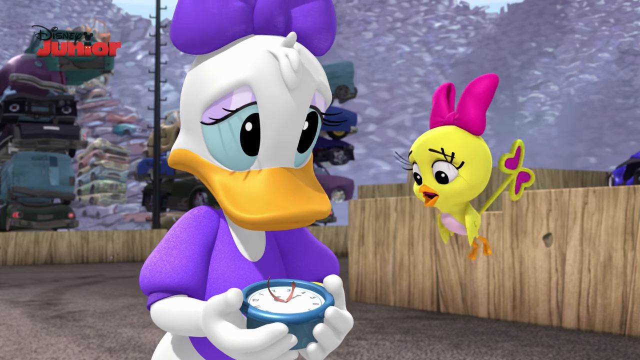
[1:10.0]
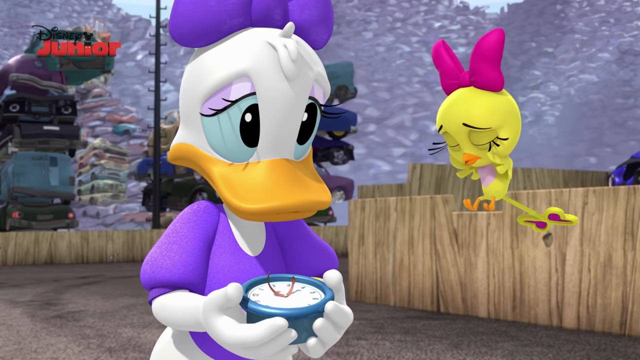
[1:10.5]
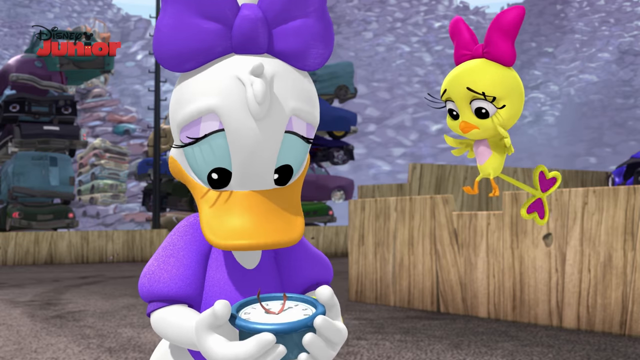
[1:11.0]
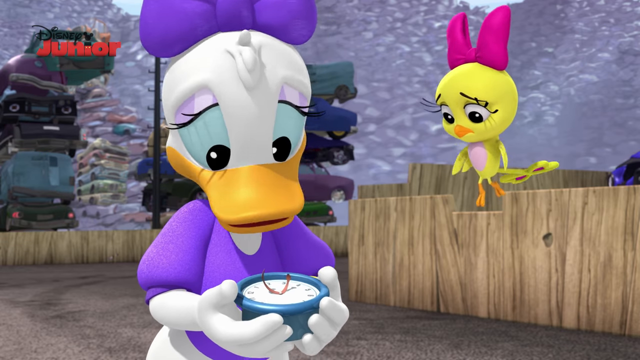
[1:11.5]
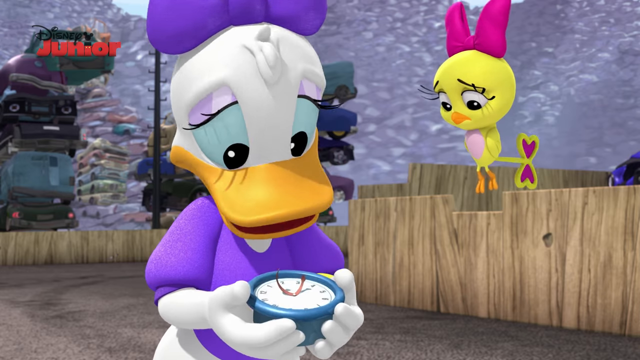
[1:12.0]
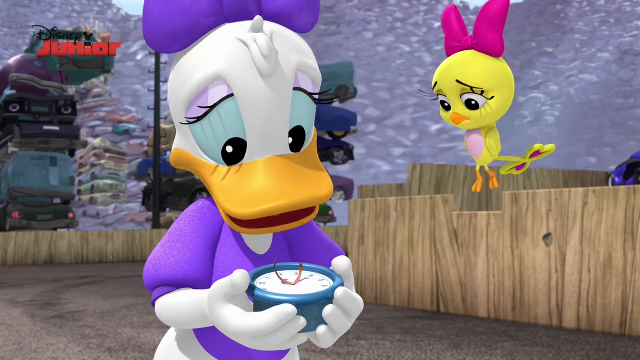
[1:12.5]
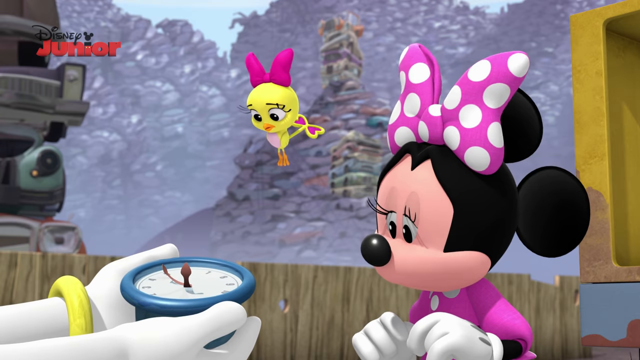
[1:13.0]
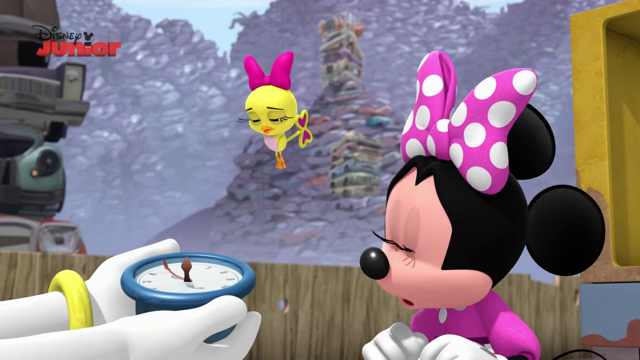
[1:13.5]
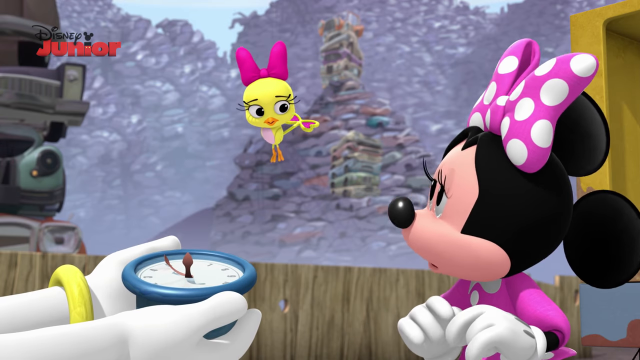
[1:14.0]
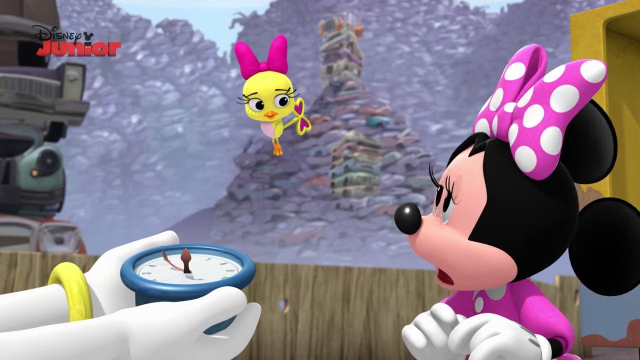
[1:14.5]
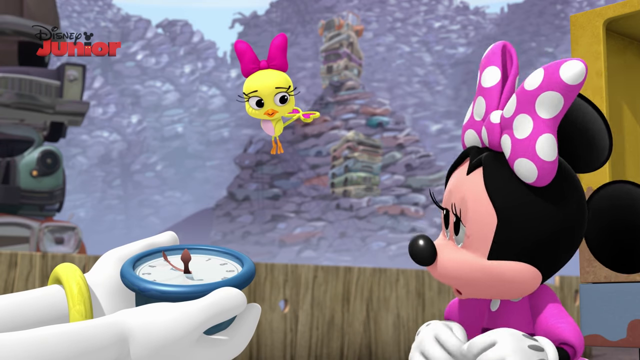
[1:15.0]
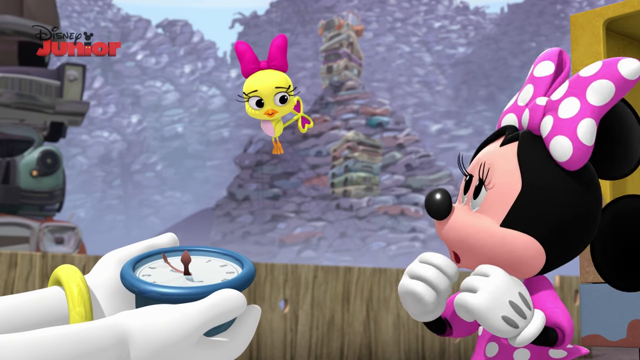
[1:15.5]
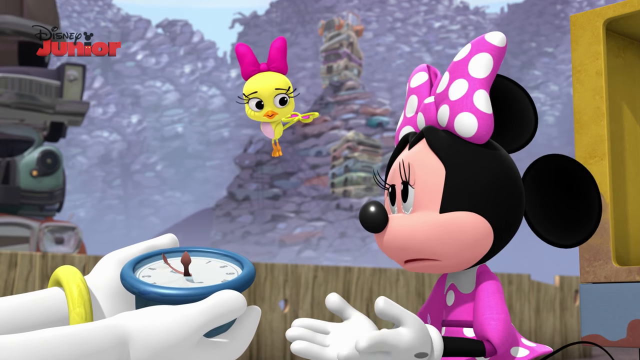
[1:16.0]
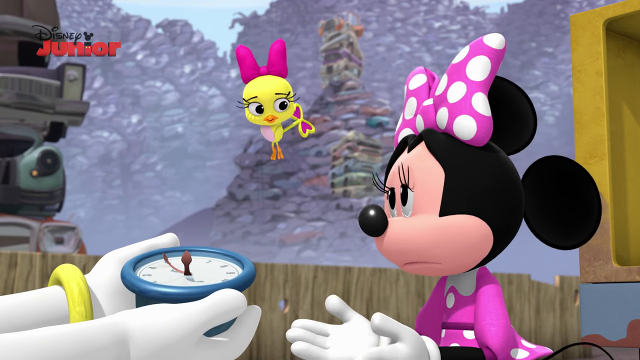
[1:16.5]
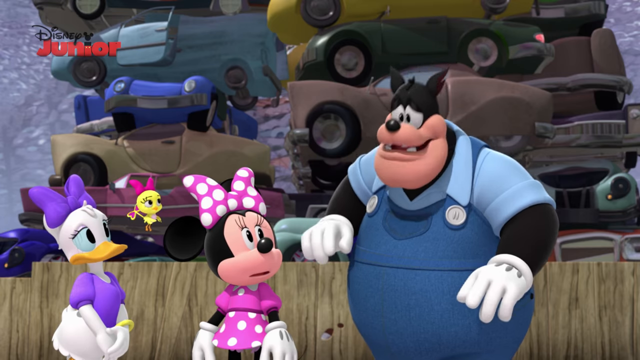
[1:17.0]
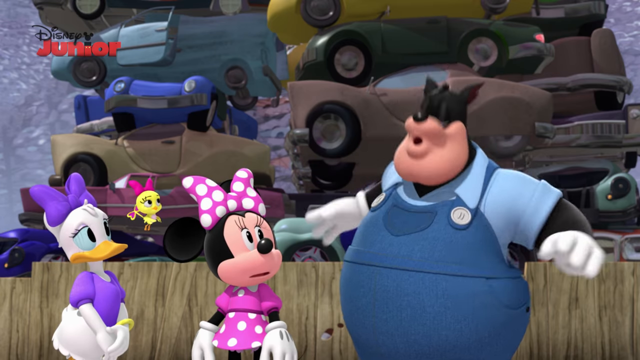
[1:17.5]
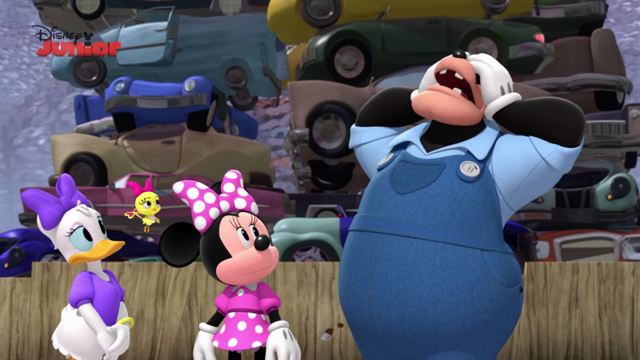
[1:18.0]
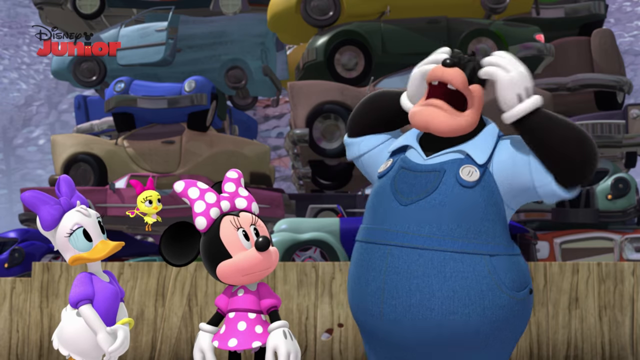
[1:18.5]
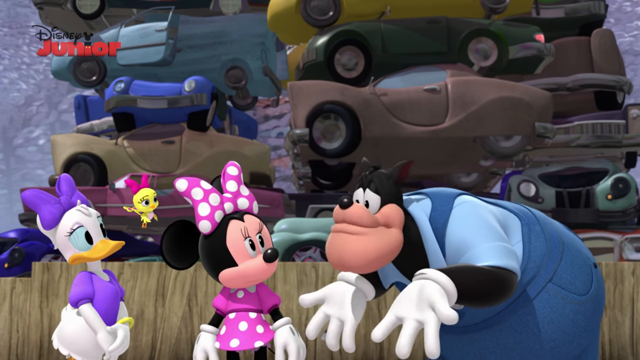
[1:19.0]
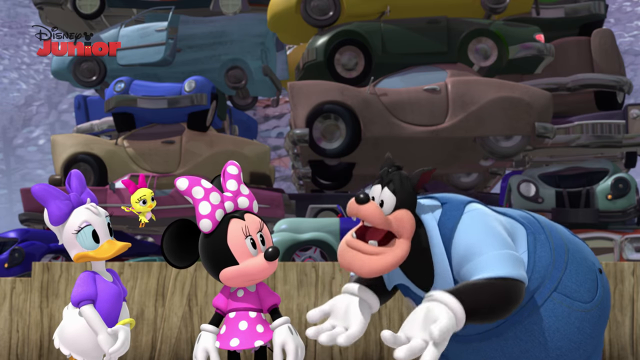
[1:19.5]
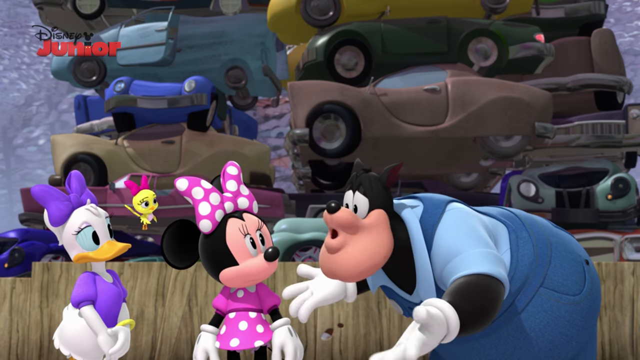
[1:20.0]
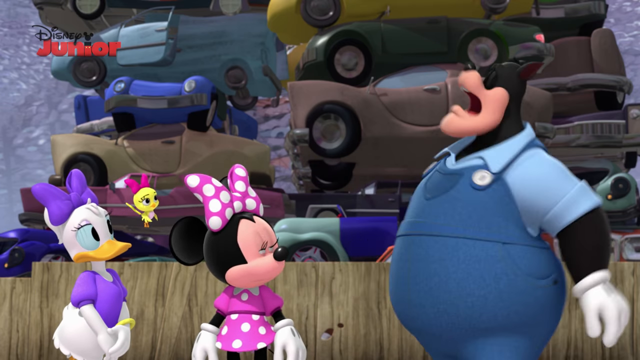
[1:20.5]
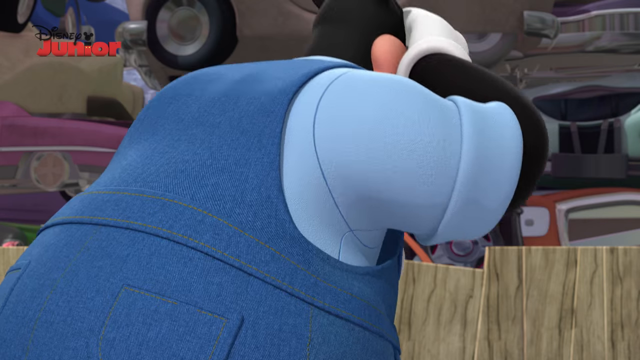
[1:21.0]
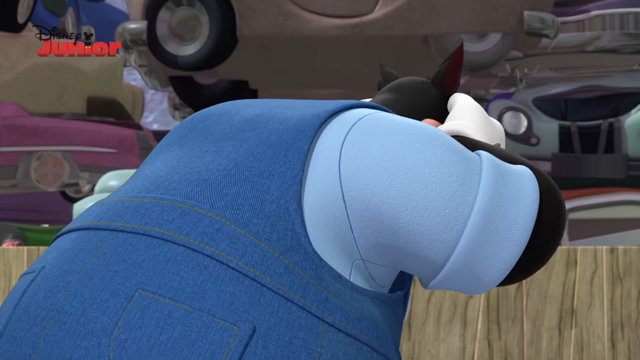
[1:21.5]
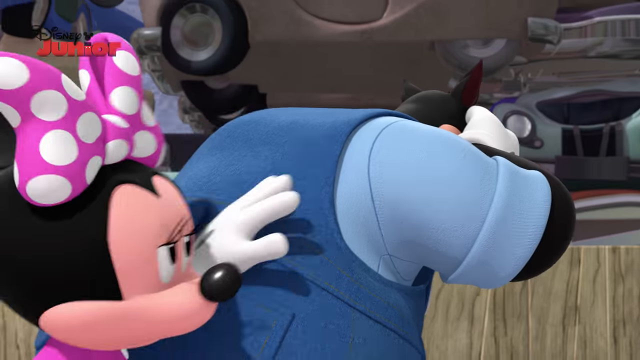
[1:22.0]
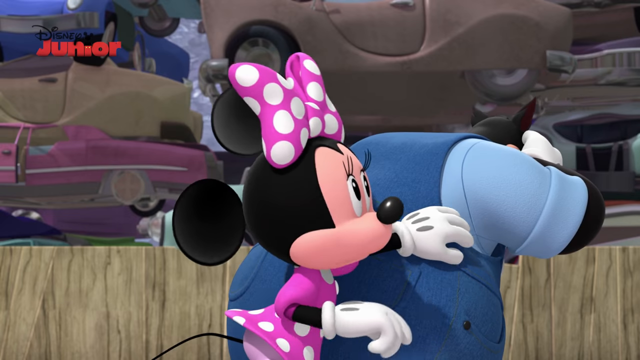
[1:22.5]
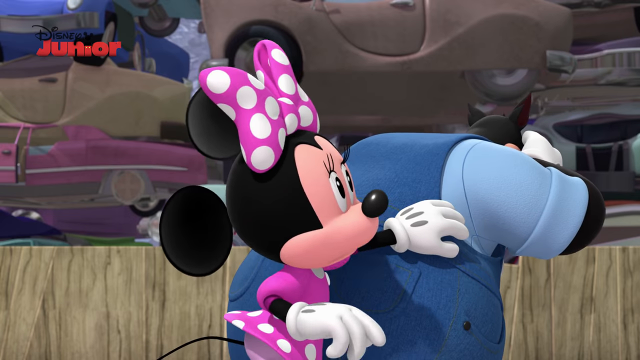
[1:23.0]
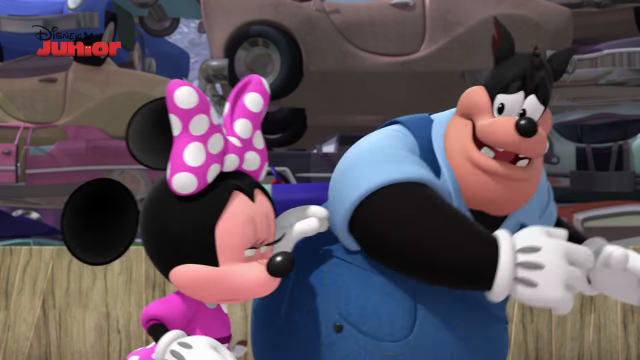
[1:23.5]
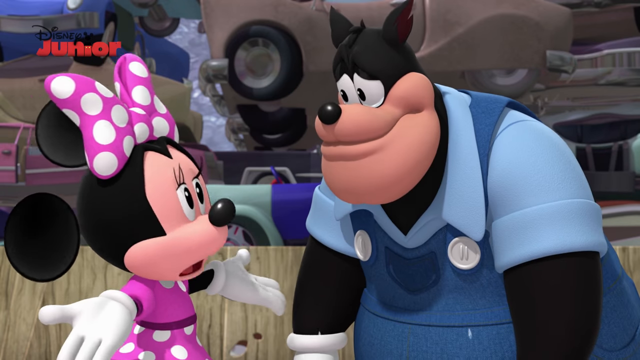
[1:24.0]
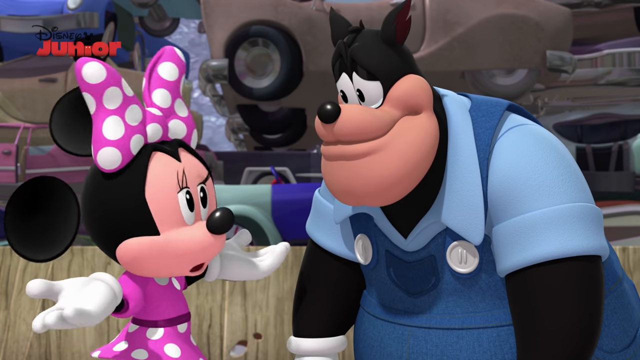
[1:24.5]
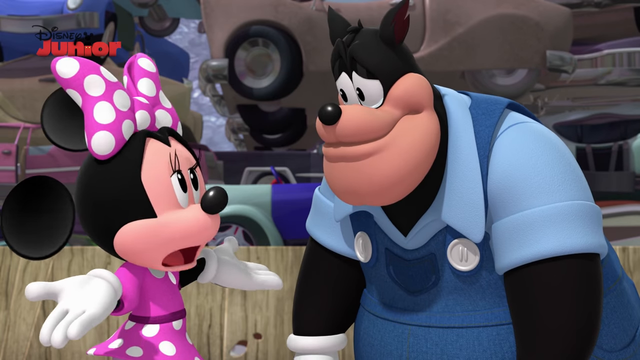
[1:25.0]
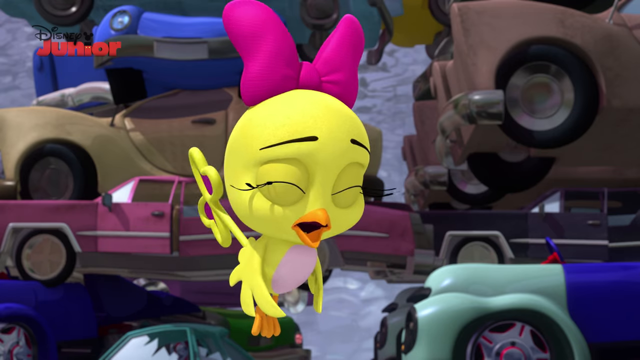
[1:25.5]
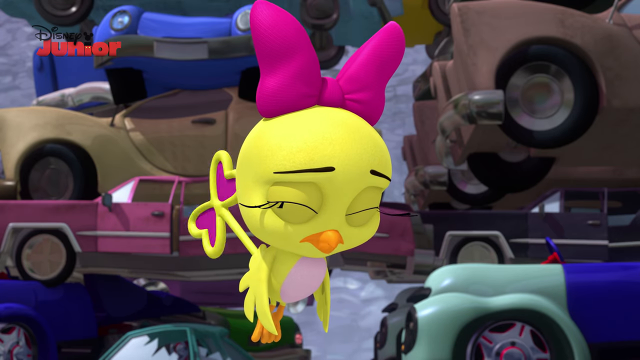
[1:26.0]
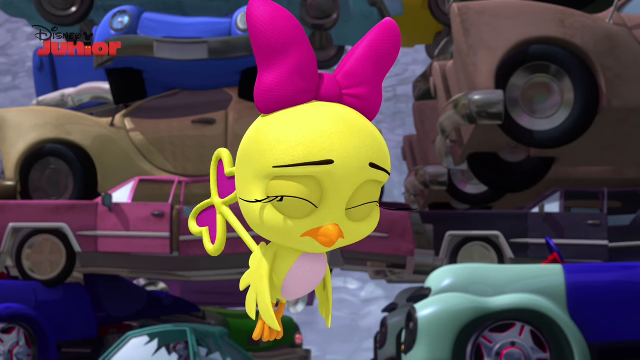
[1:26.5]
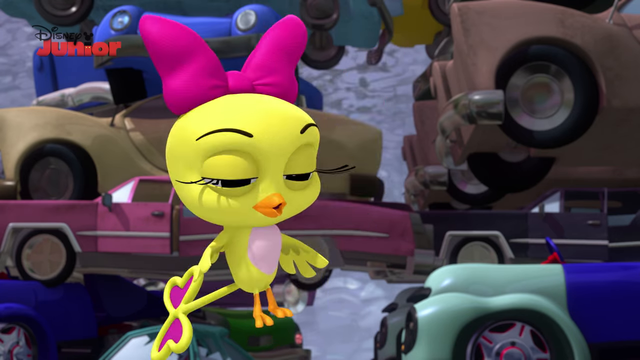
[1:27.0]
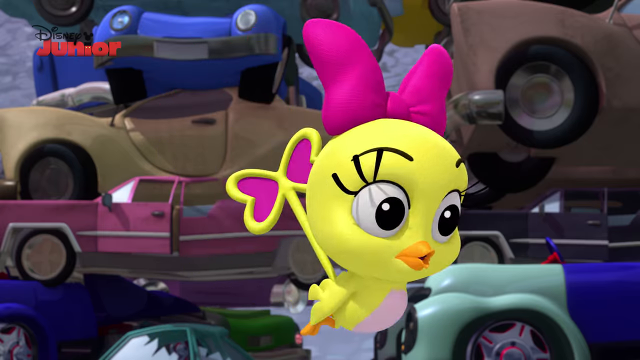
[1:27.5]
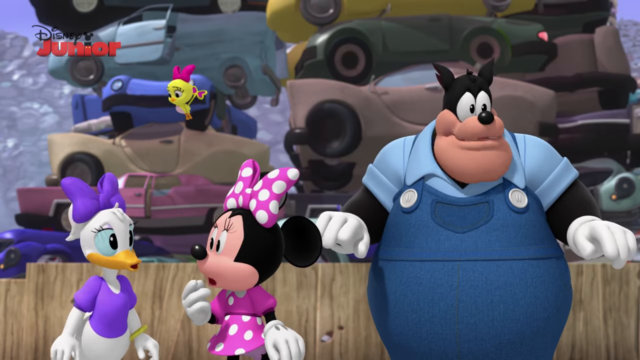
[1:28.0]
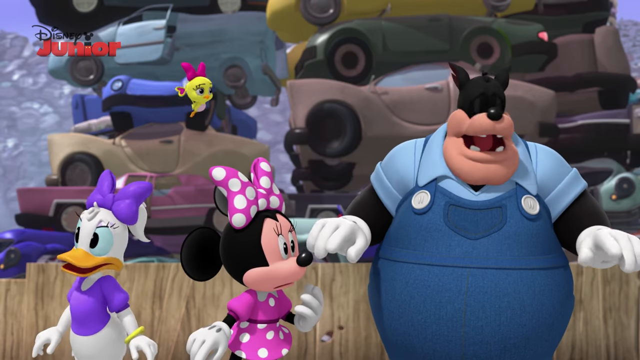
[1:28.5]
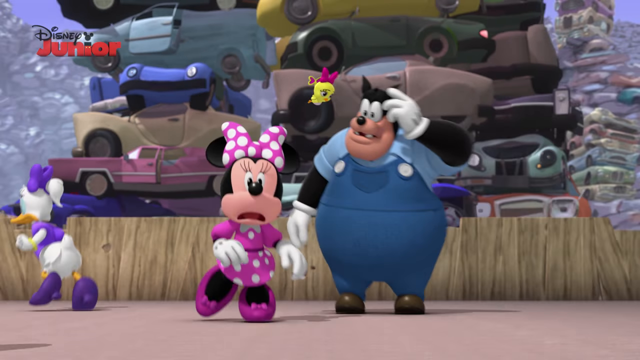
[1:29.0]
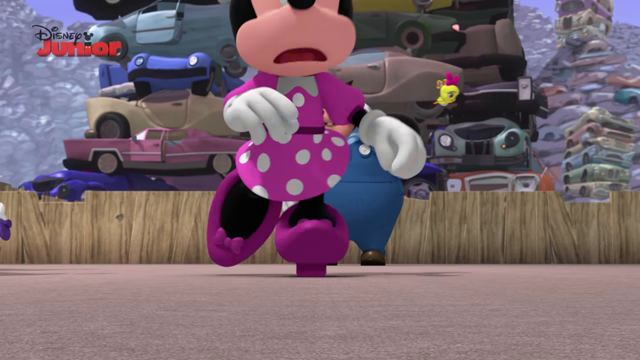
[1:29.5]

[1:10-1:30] Daisy holds the clock face in both hands, talking about it to the yellow cuckoo bird hovering over her right shoulder. Daisy looks very sad, as does the cuckoo bird; at times Daisy is downcast with her eyes closed, and both look very worried. The view changes to show Minnie on the right side of the screen, also looking at the clock face; only Daisy's hands are visible, as she is off screen to the left, with the yellow cuckoo bird hovering over her left shoulder. Minnie explains something, looking very sad and mournful. The camera pulls out to show all three women with Pete now standing next to them. Pete fills the left side of the screen, and the three women are on the right side, from left to right Daisy, the yellow cuckoo bird and Minnie. Many cars are in the background. Pete looks very sad and upset; he throws his hands up in the air and then covers his eyes and face with them. He turns away from the women and almost looks like he is crying, his head and shoulders shaking, his hands covering his face. Minnie runs up behind him and pats her hand on his back, trying to get him to stop crying. He turns around, tears falling from his face, hunched over and facing her, as she continues talking to him. Next, the yellow cuckoo bird, eyes closed, appears to be crying and mourning. Suddenly she starts, and all four characters are in the same pose as earlier, glancing and looking around as if searching for something lost. The three female characters run off, Daisy to the left, the cuckoo bird to the right and Minnie toward the camera, while Pete stands there looking confused.